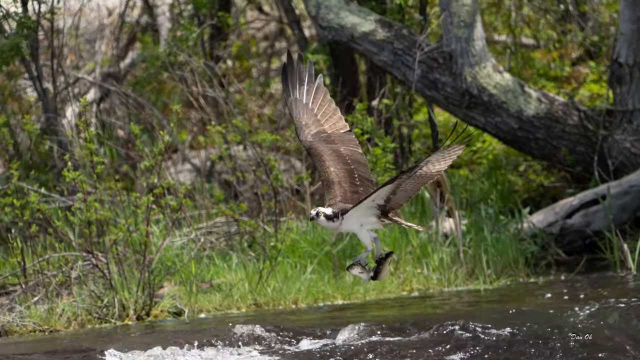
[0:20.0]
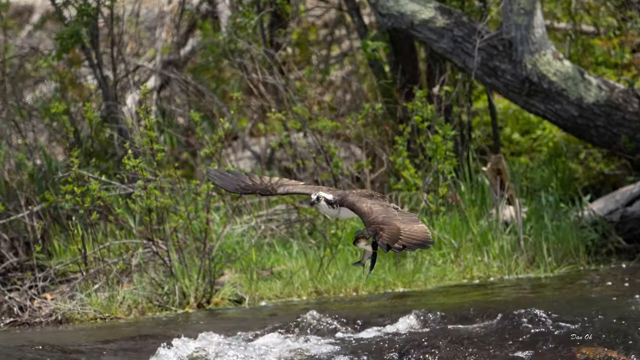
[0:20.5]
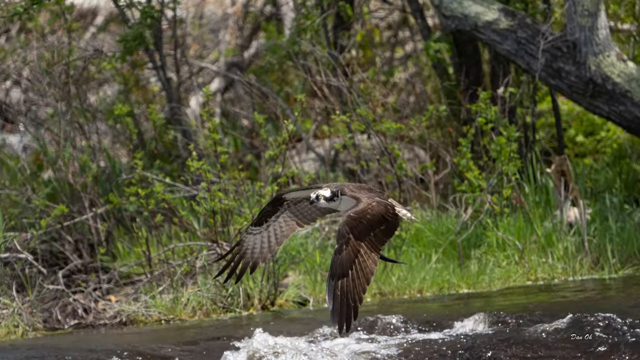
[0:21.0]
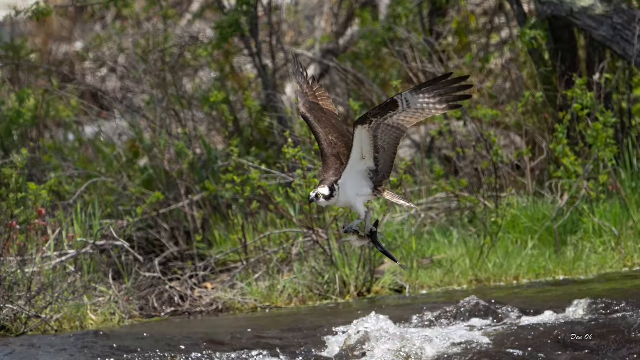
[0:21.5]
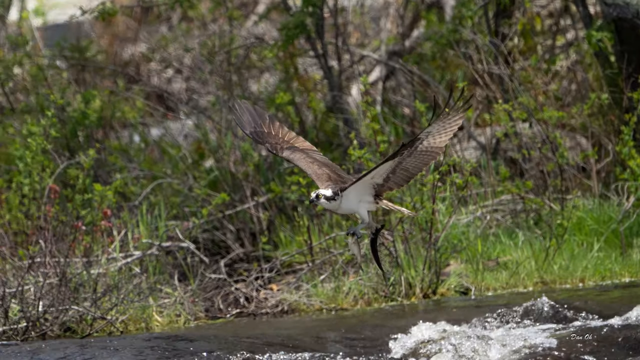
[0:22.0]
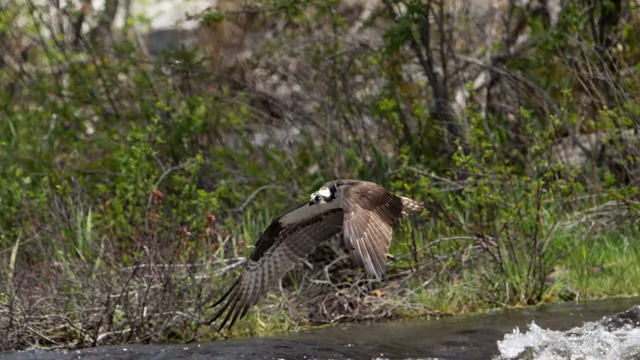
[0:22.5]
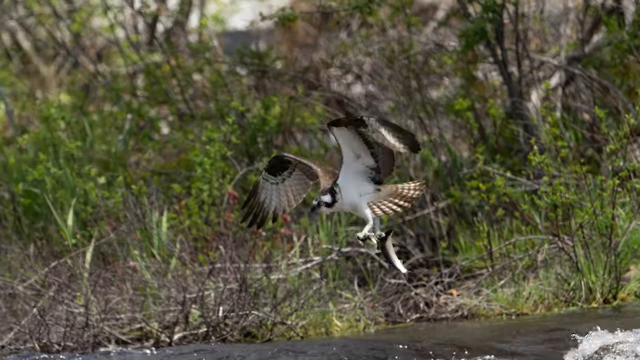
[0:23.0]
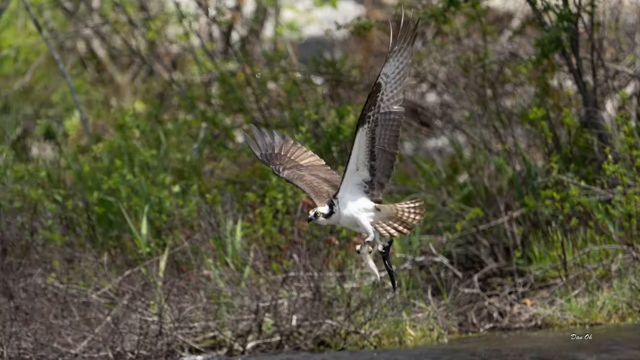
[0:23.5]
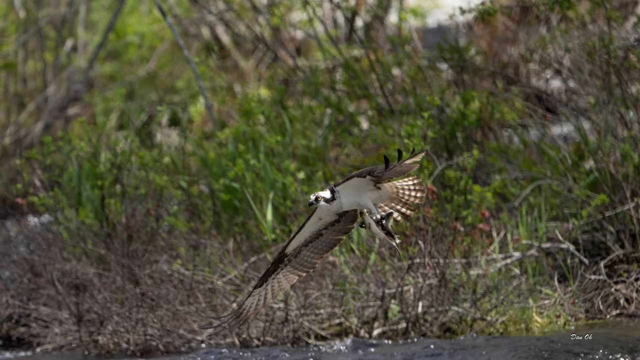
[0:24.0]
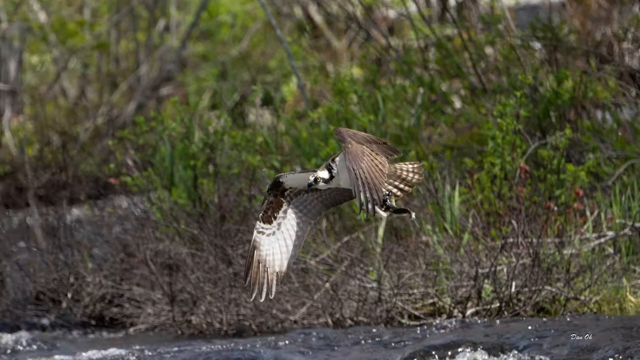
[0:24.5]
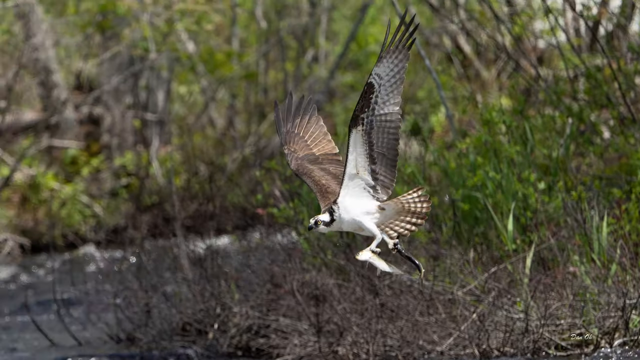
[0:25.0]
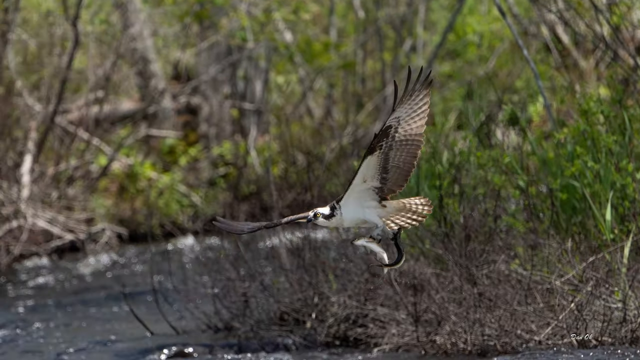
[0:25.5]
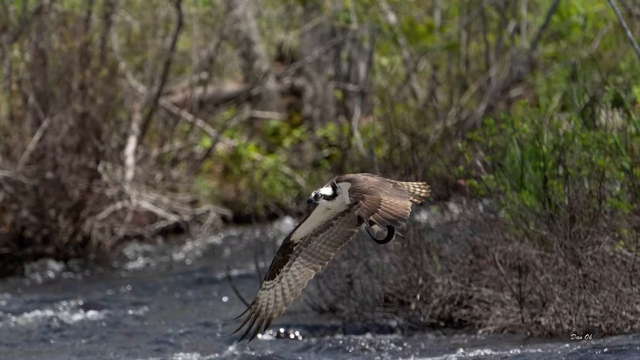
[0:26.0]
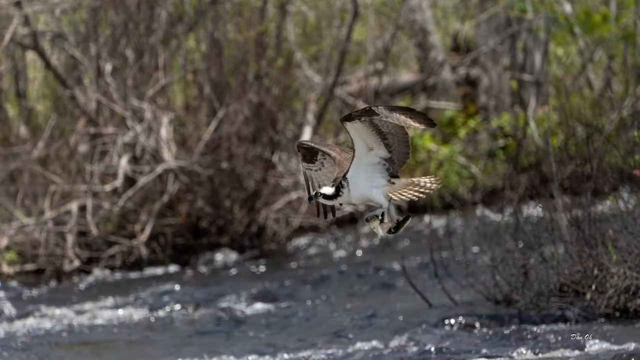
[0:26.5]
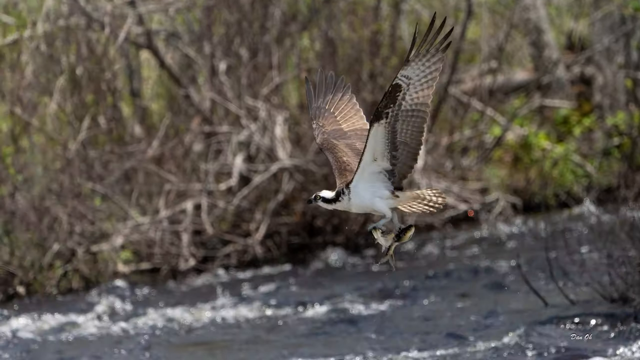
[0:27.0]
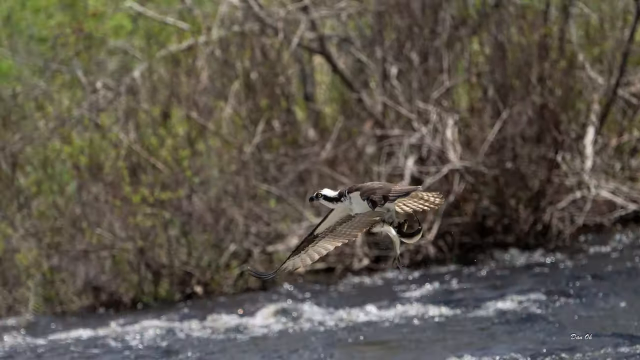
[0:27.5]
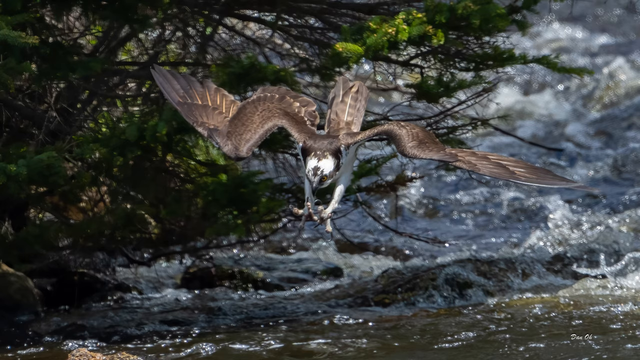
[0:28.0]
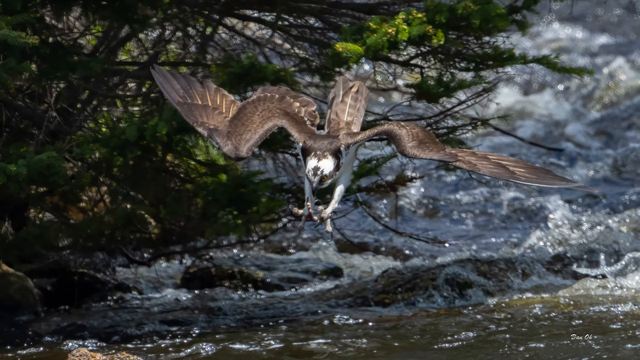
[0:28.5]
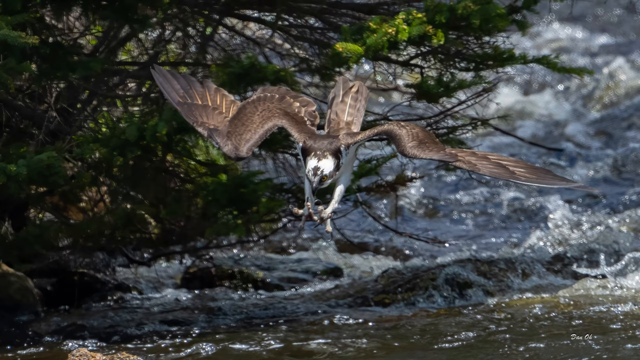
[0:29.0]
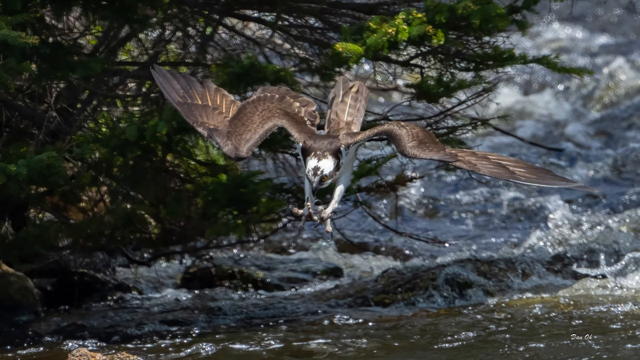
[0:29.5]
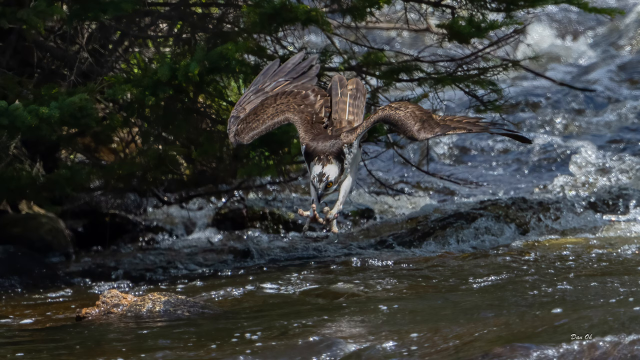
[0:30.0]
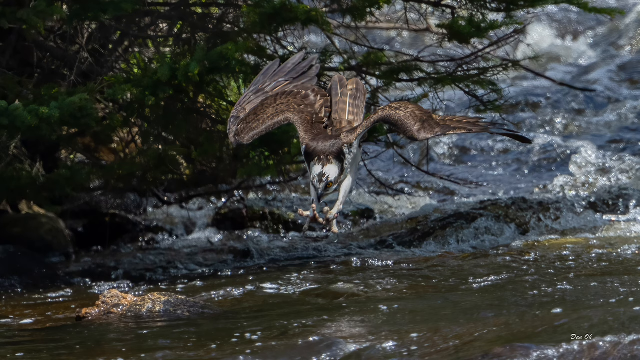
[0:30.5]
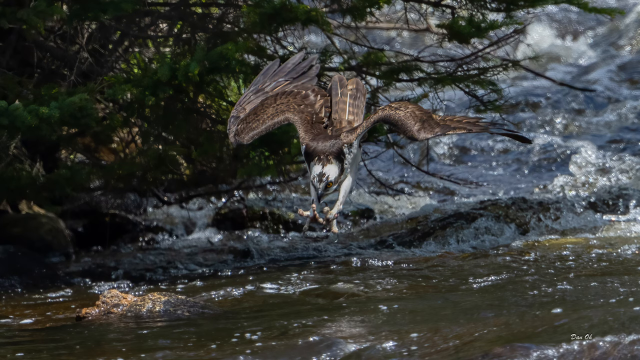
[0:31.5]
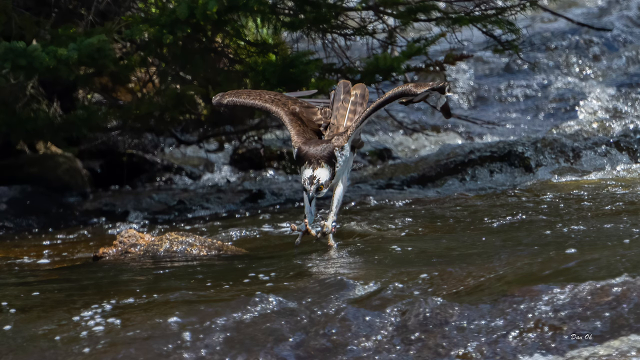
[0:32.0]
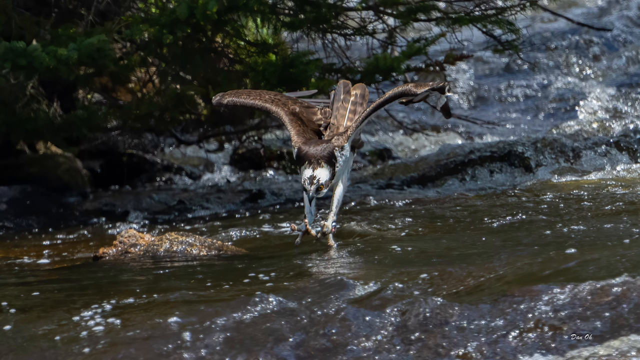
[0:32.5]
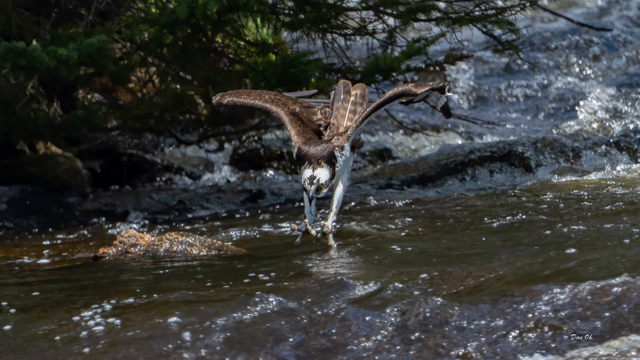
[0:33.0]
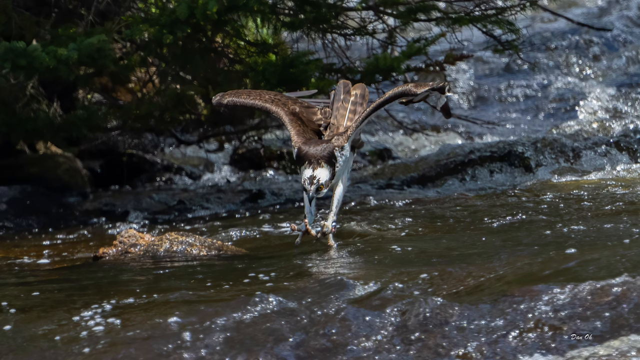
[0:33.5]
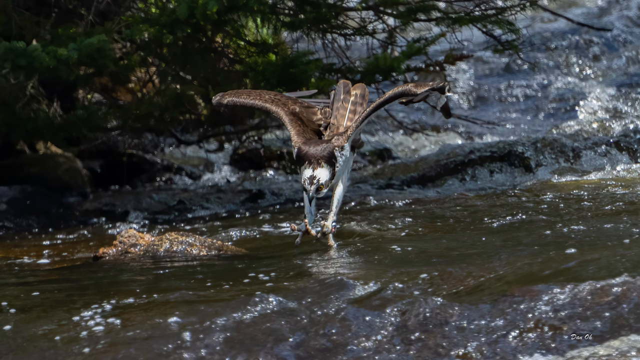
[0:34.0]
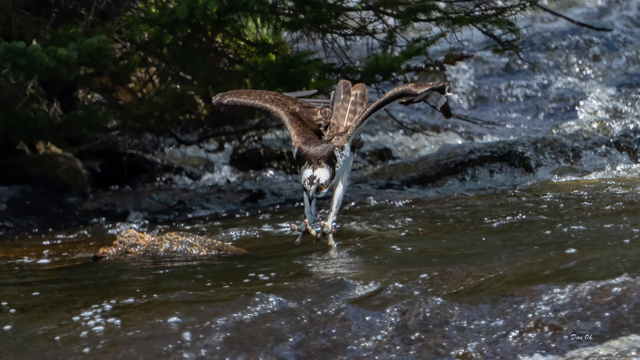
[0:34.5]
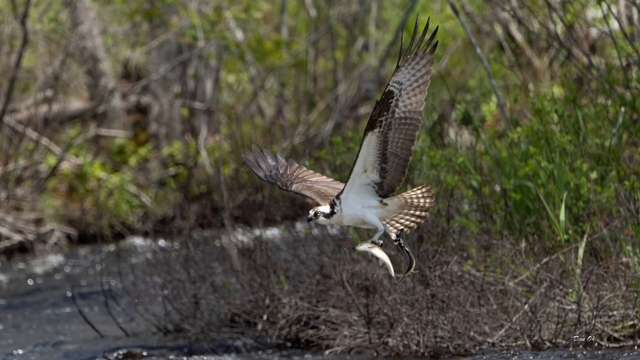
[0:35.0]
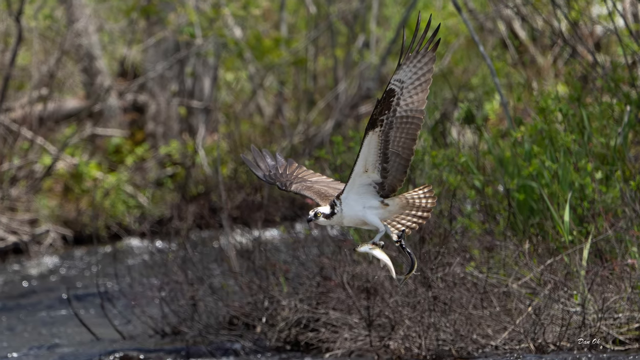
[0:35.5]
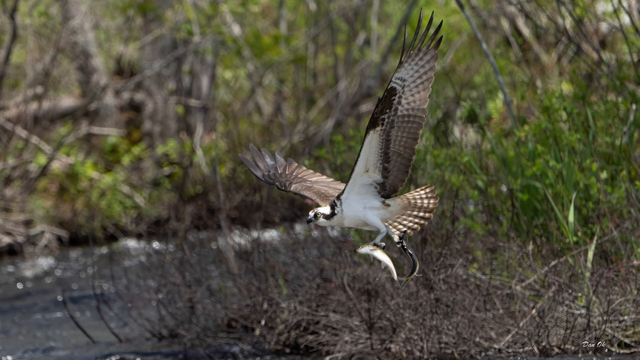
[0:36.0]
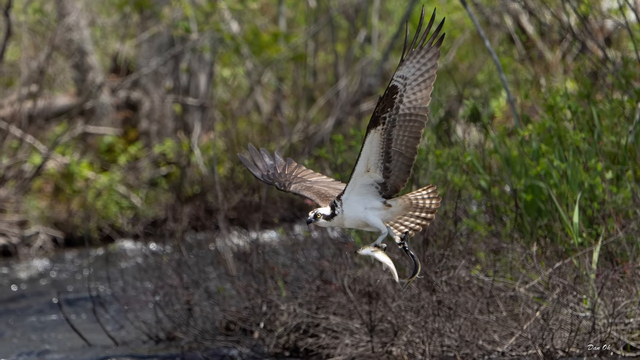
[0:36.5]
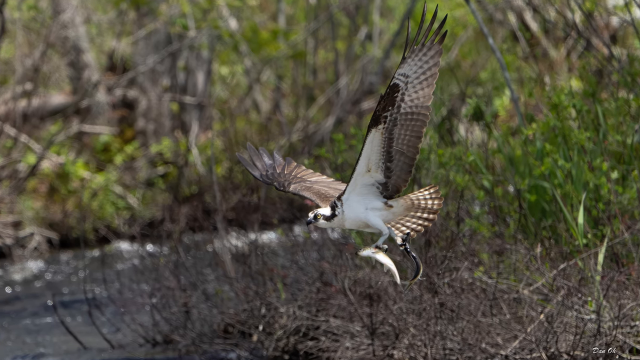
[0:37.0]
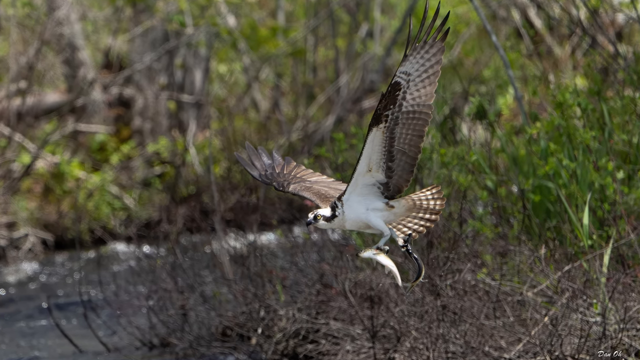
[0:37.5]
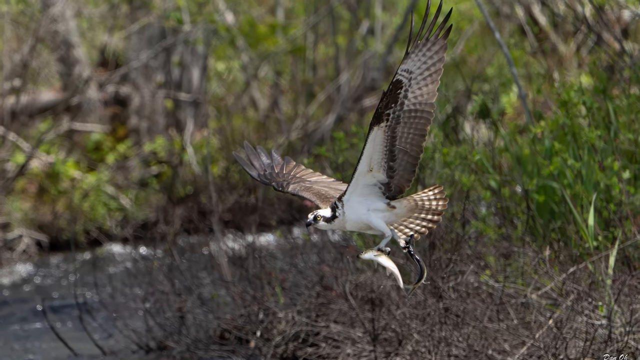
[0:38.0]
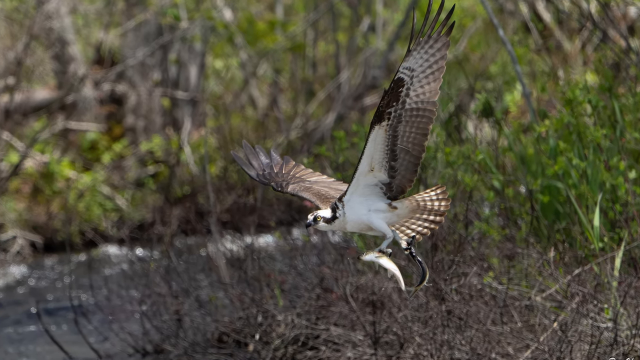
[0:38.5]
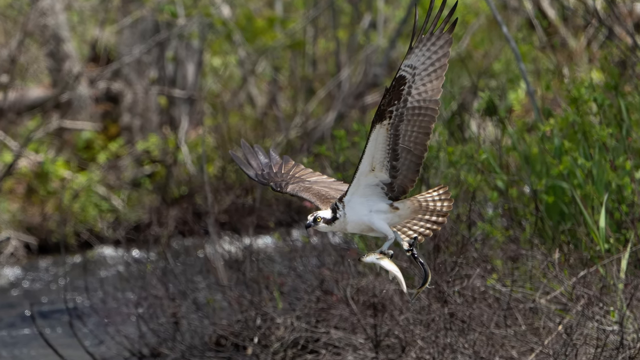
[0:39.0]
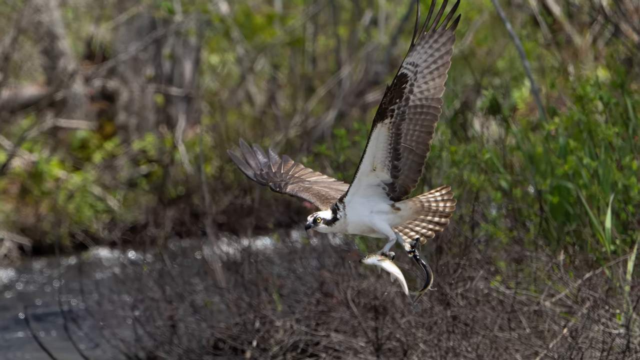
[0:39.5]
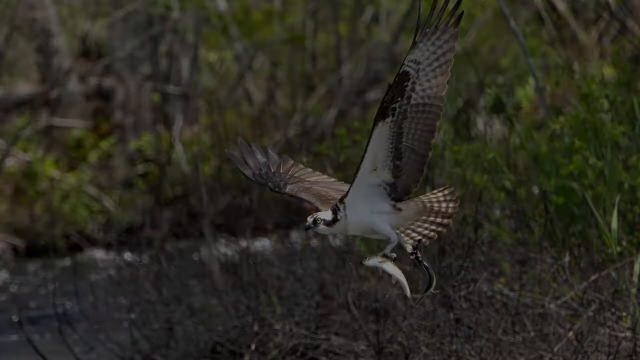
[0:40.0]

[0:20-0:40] The eagle continues carrying the fish, which looks pretty small, with a sort of black top and a white bottom. The video then cuts to a still image of the bird holding the fish in its talons, giving a clear view of both the bird and the fish. The bird is not really an eagle; it is an unidentified type of bird that lacks an eagle's yellow beak and instead has a very short, kind of nose-like beak. Its wings are dark brown, its talons look pretty sharp, and it carries the fish with its left talon.